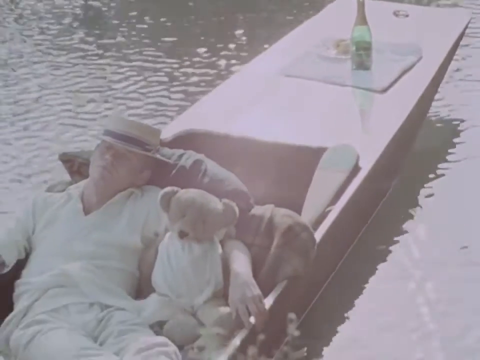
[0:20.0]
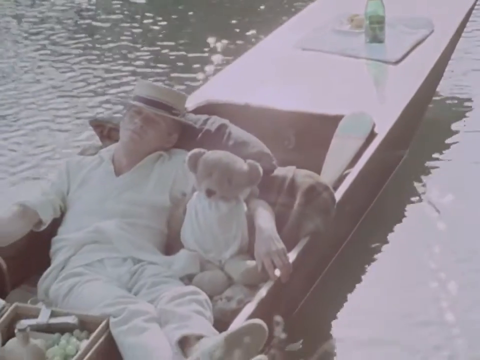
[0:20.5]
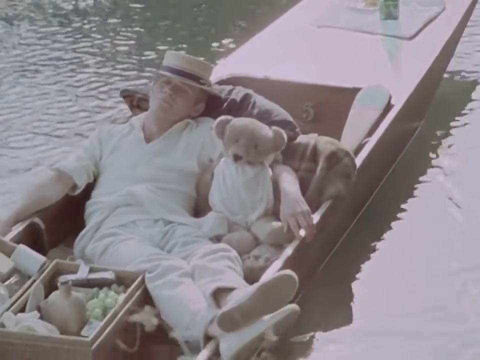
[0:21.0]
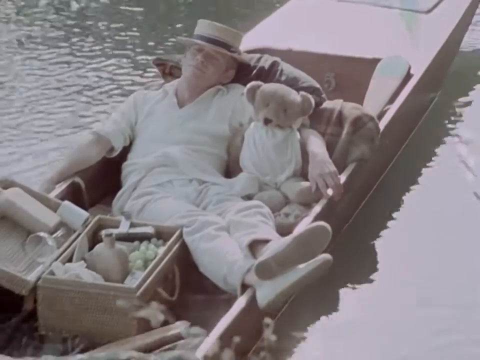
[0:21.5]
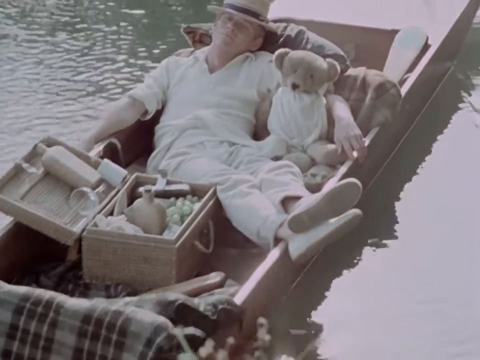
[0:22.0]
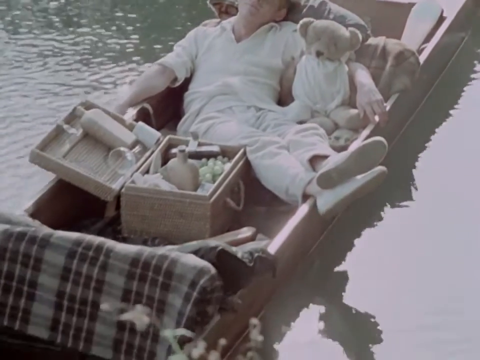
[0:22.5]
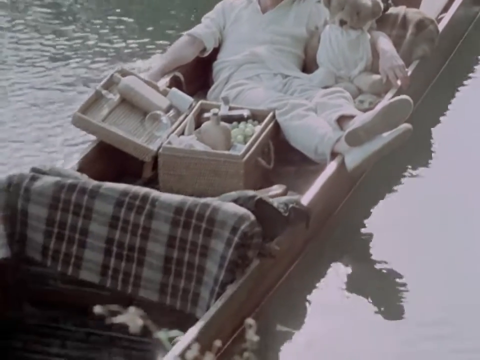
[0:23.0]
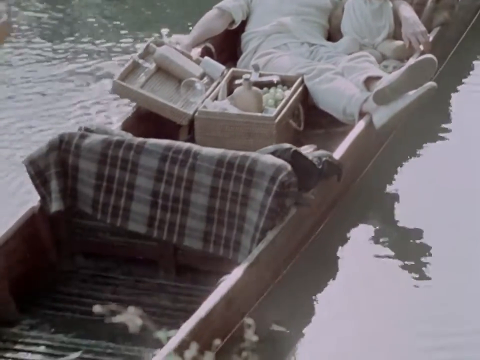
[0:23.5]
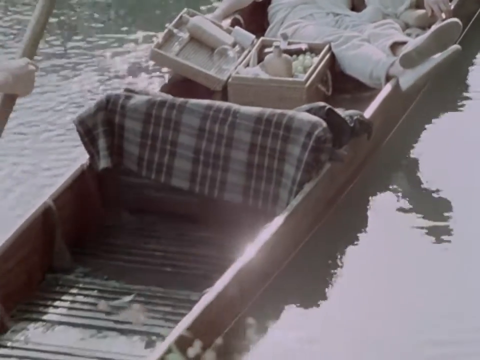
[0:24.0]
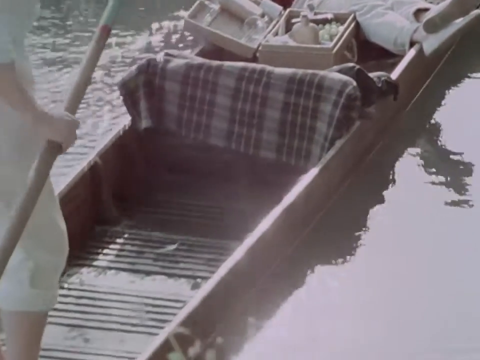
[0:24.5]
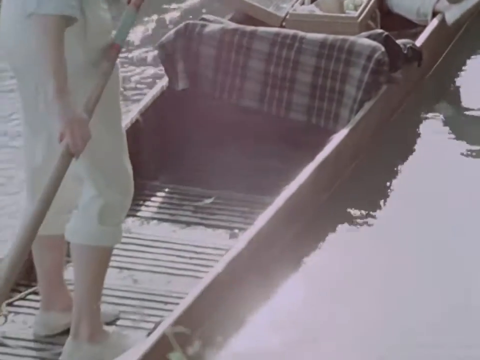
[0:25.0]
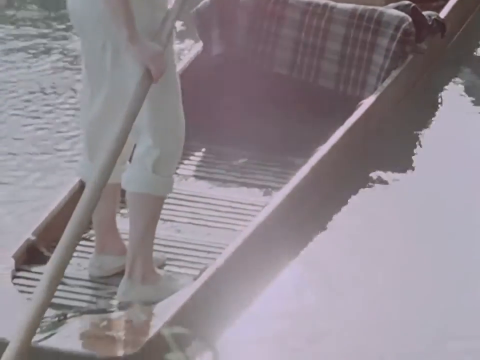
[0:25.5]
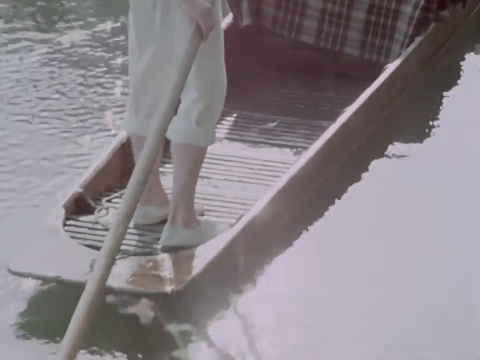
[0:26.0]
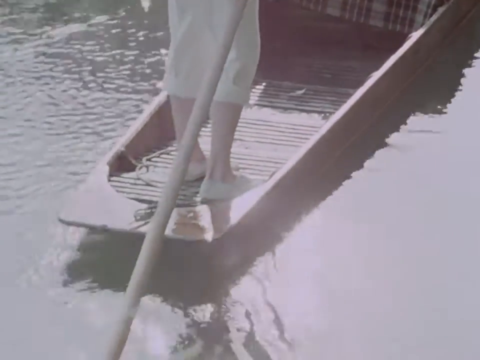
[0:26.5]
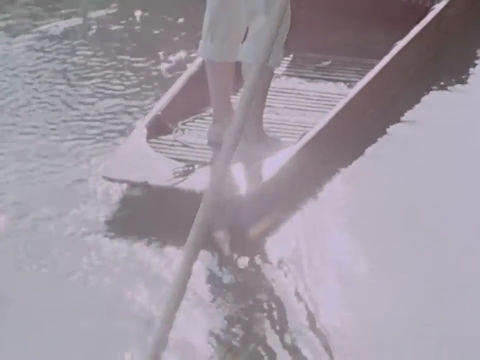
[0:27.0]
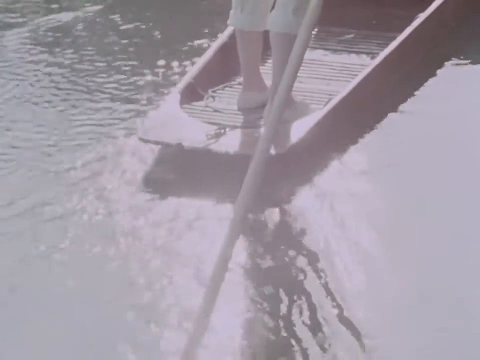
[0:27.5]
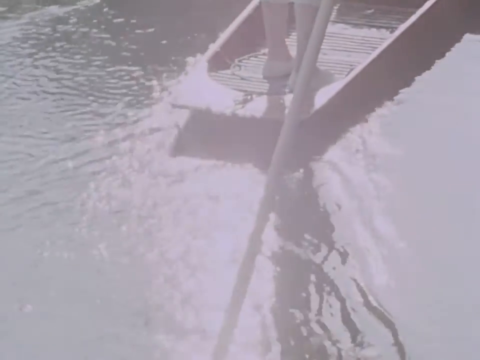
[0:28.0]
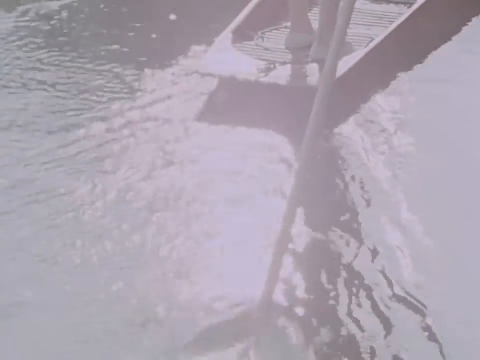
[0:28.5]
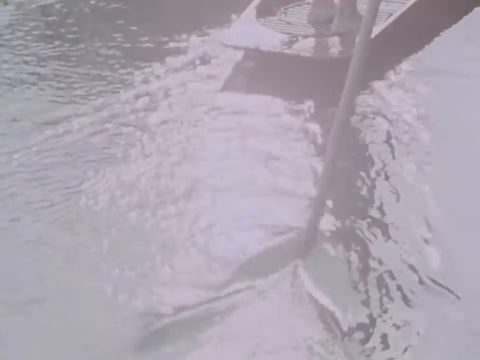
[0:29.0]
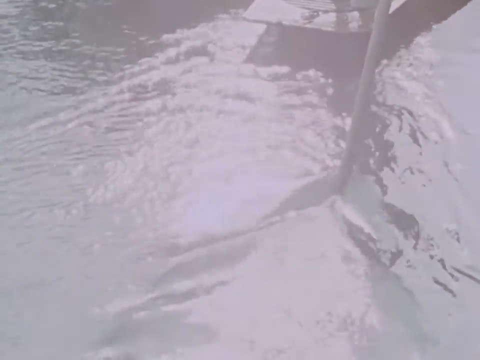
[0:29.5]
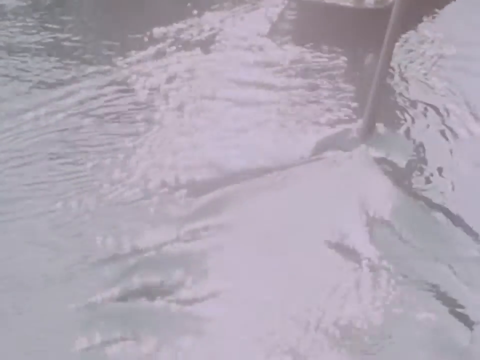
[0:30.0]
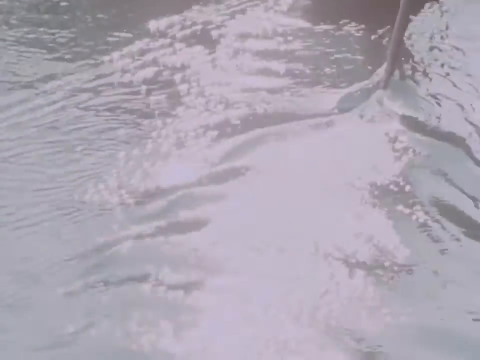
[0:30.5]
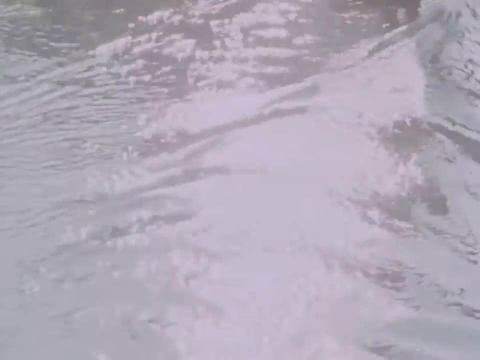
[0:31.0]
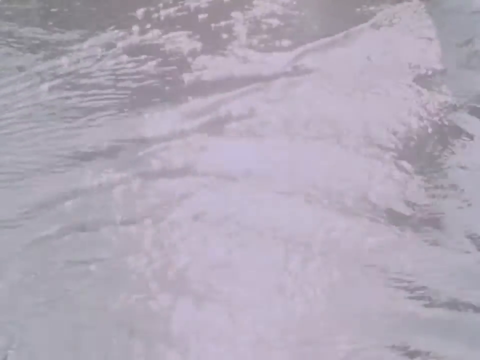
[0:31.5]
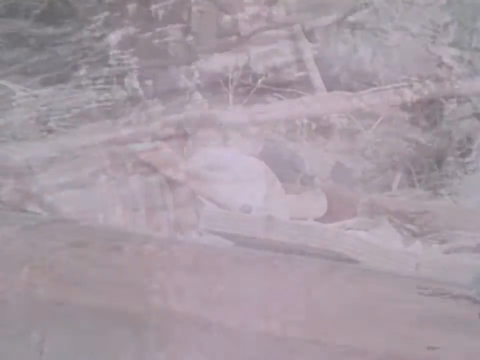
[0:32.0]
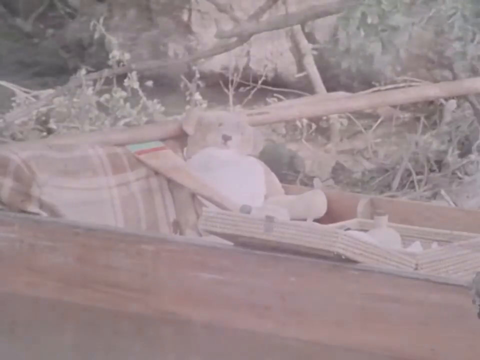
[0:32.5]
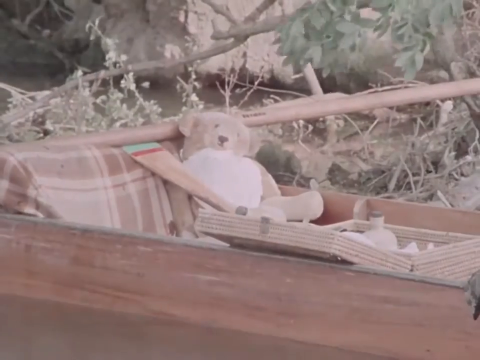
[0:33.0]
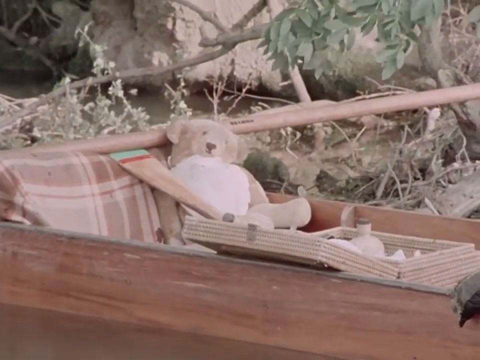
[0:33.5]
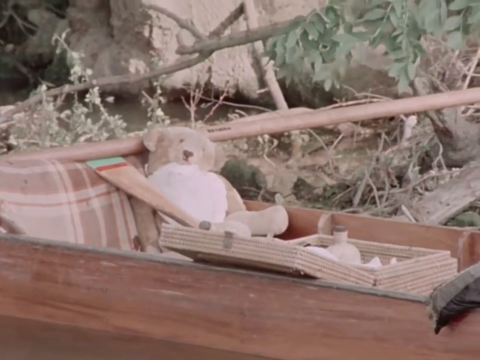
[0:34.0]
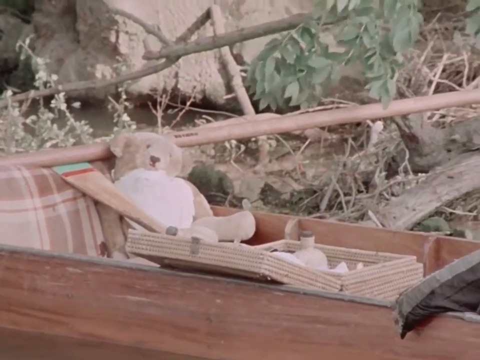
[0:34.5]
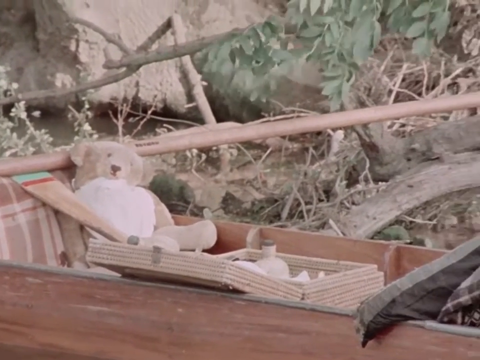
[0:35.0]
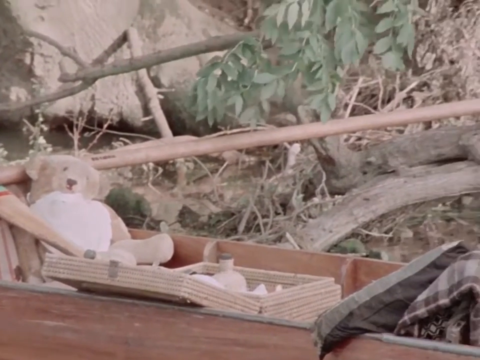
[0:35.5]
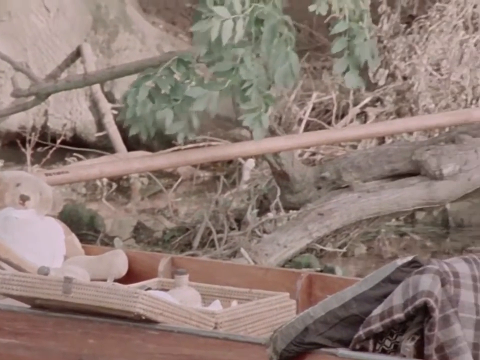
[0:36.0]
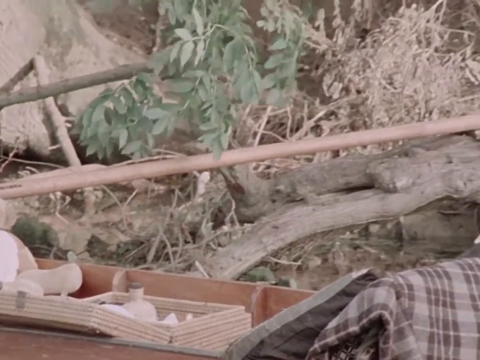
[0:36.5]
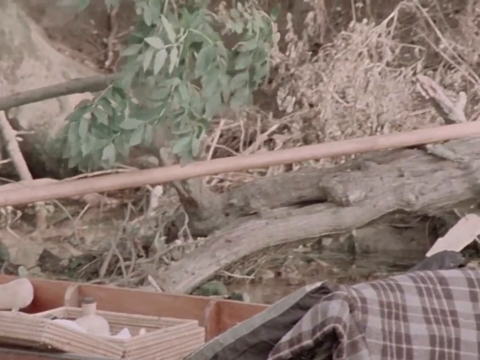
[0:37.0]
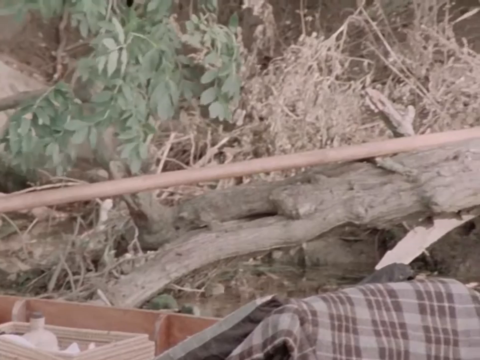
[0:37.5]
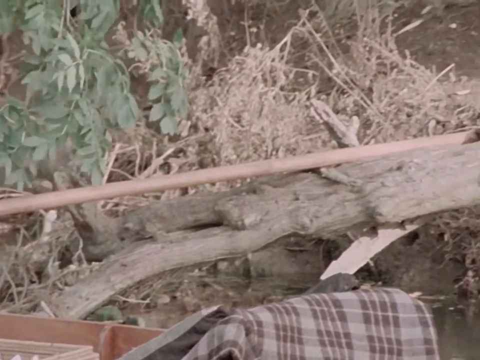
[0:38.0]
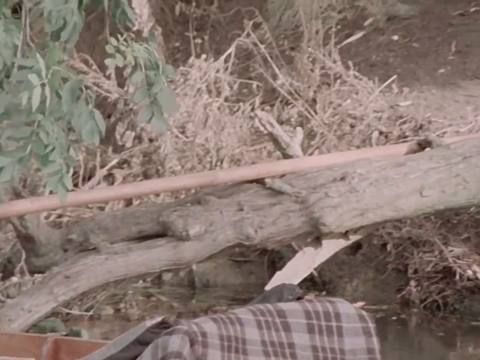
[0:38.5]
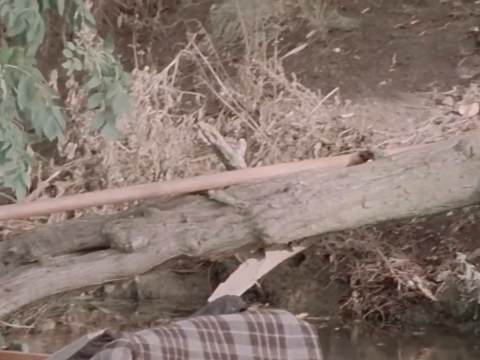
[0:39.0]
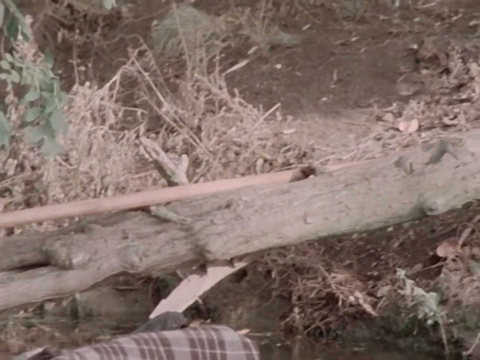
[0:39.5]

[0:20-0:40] The bottle of wine and the plate of food are way out at the front, on the bow of the boat, well in front of where the passenger rides. He sits with his back to the front, leaning against a pillow, his straw hat tilted rakishly over his forehead, his eyes closed and his left arm around a teddy bear. He wears a white shirt, white slacks and white shoes; his legs are stretched out and his ankles rest on the side of the boat, so the white shoes hang over the edge of the pirot. At his right hip is an open picnic basket, presumably where the food came from, with green grapes in it, and a wine carafe or carafe of some sort is still visible. The young man poles at the back of the pirot in the stern, dragging the pole along with him. Then the boat has been pulled ashore. The teddy bear is in the boat, but the man is no longer in it, and the young man who was poling is no longer there.